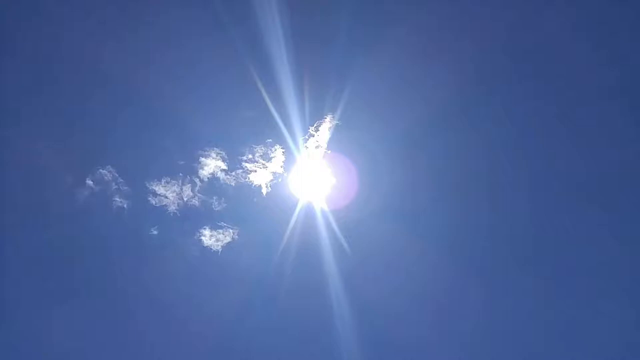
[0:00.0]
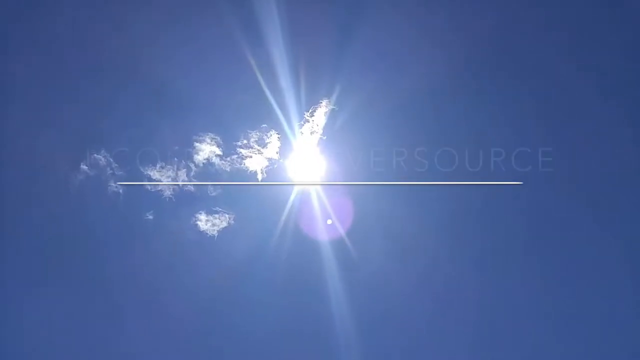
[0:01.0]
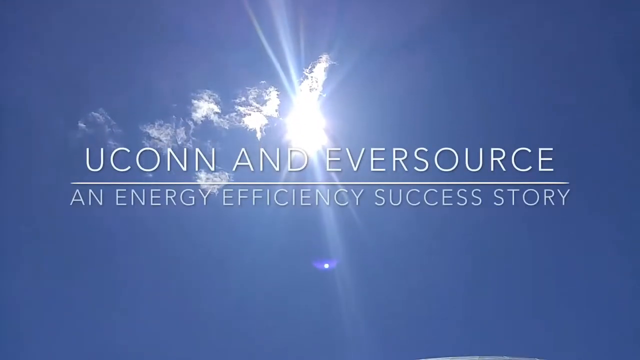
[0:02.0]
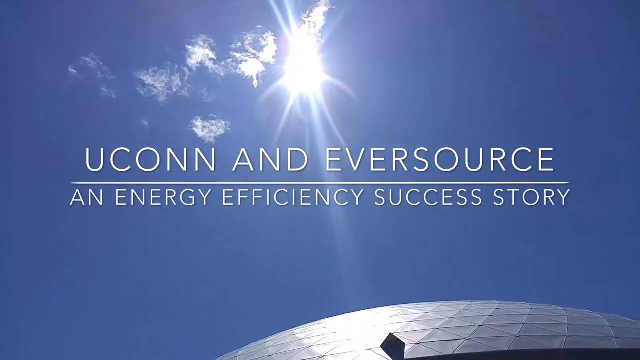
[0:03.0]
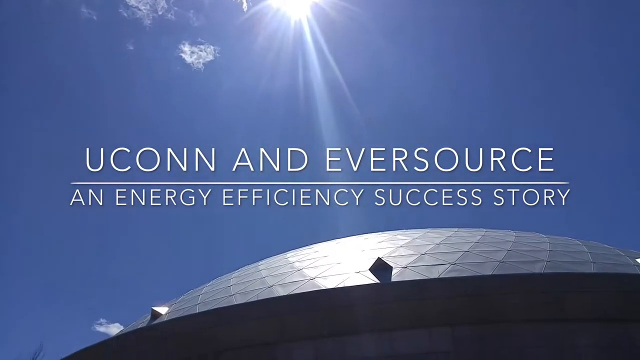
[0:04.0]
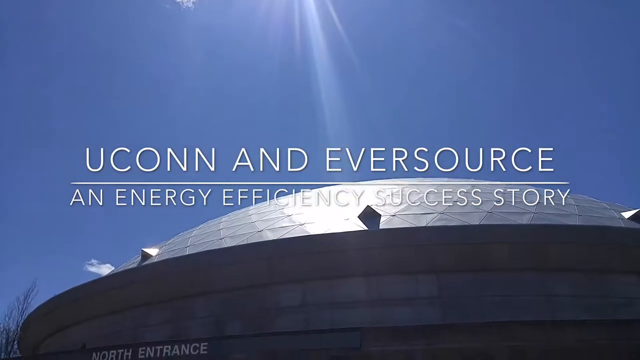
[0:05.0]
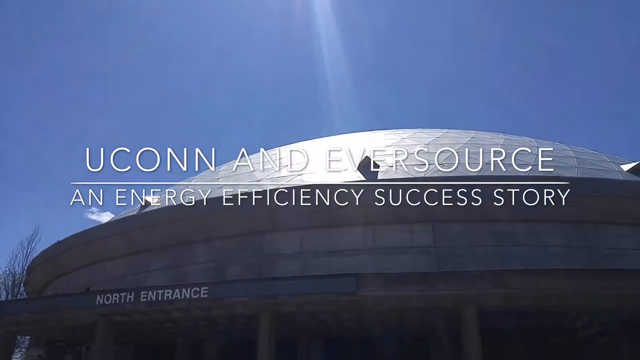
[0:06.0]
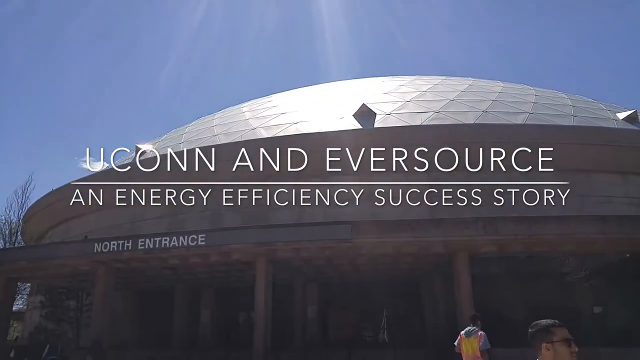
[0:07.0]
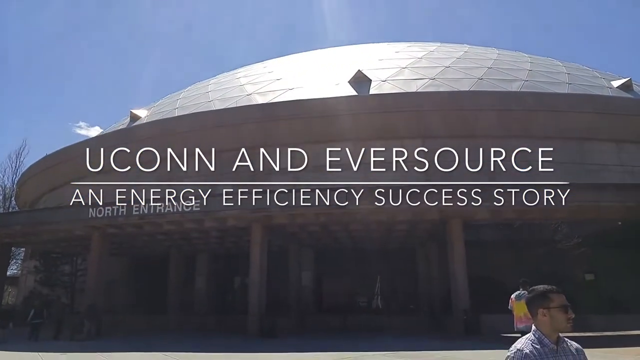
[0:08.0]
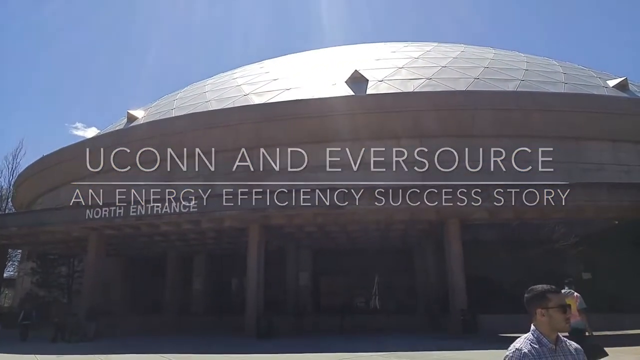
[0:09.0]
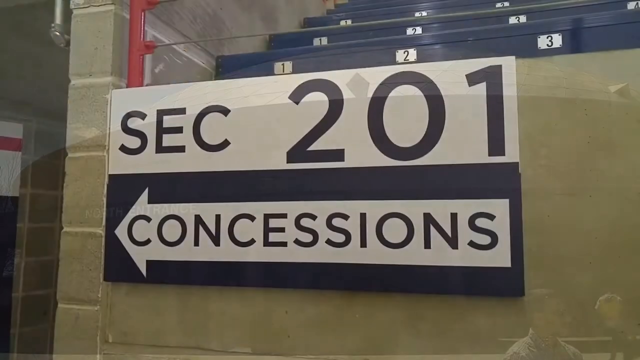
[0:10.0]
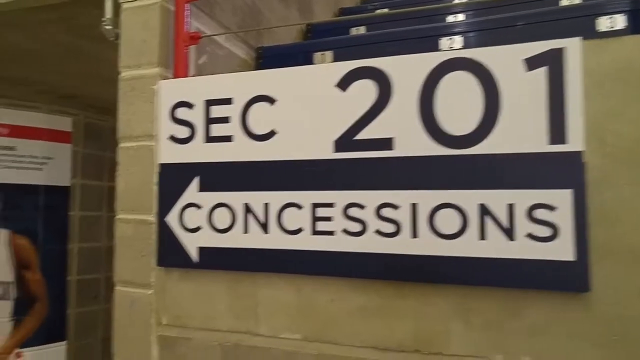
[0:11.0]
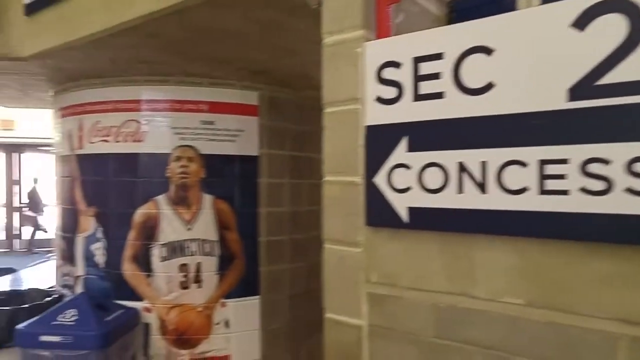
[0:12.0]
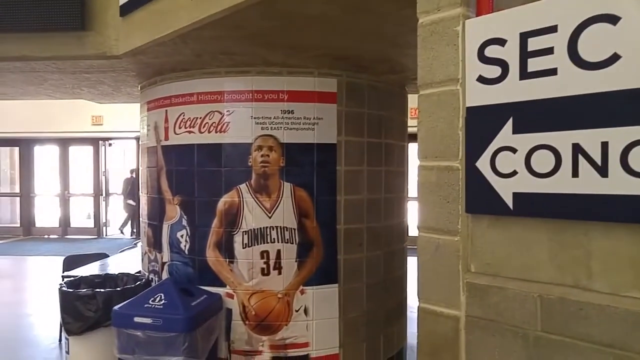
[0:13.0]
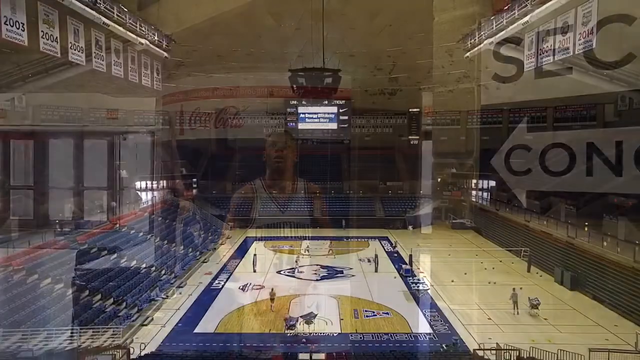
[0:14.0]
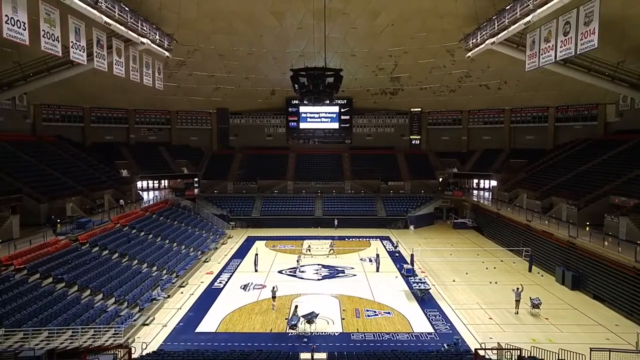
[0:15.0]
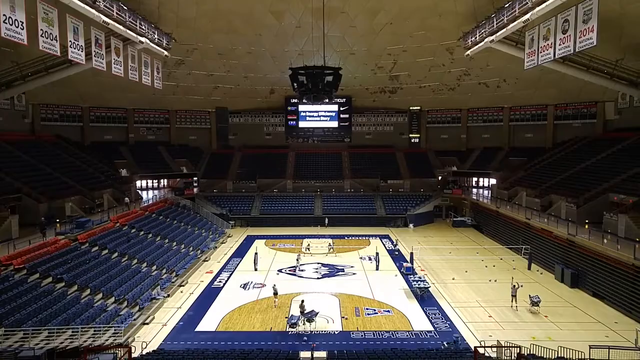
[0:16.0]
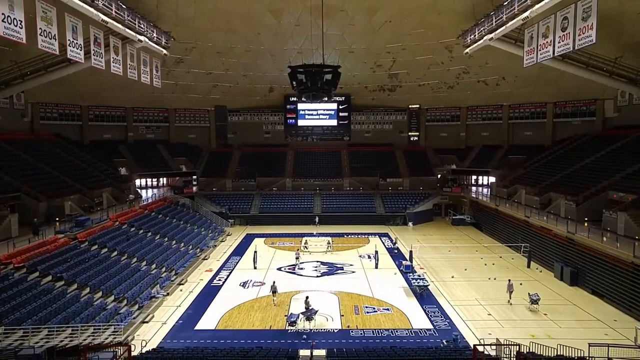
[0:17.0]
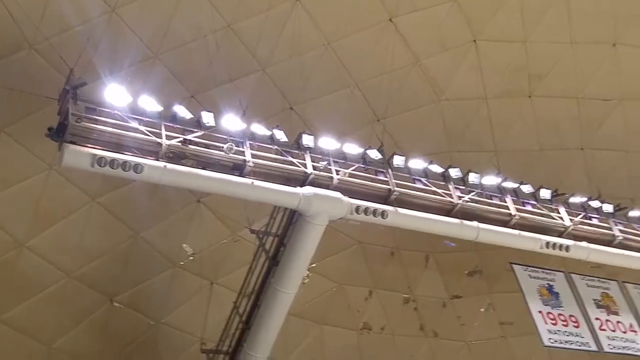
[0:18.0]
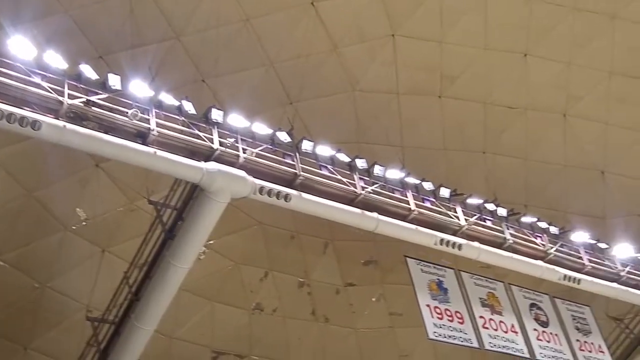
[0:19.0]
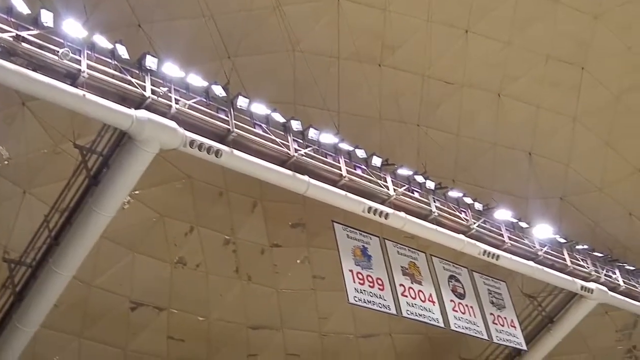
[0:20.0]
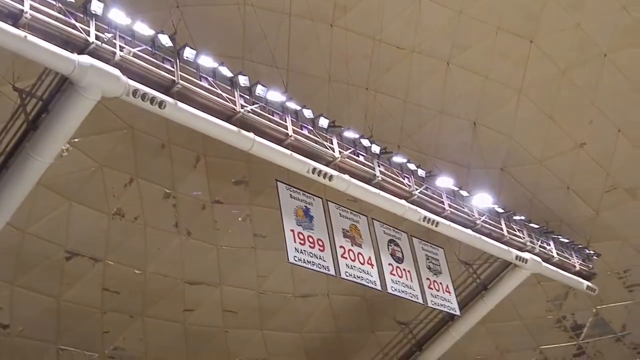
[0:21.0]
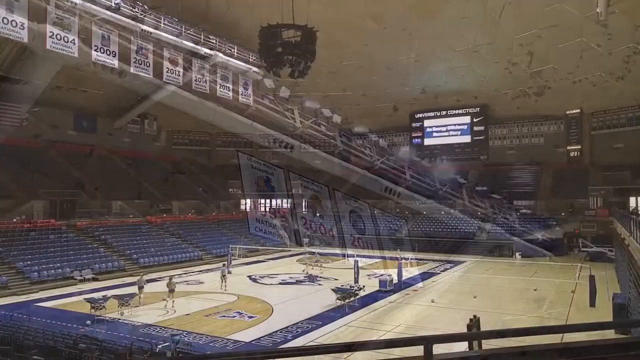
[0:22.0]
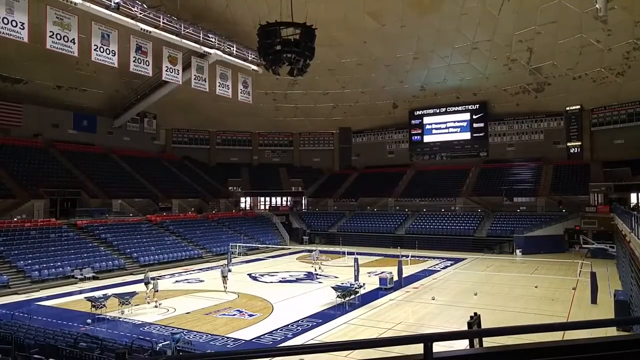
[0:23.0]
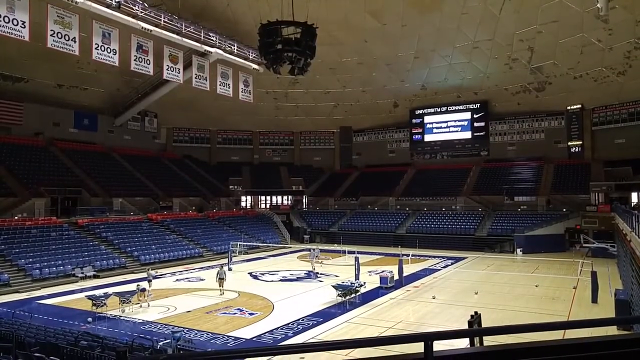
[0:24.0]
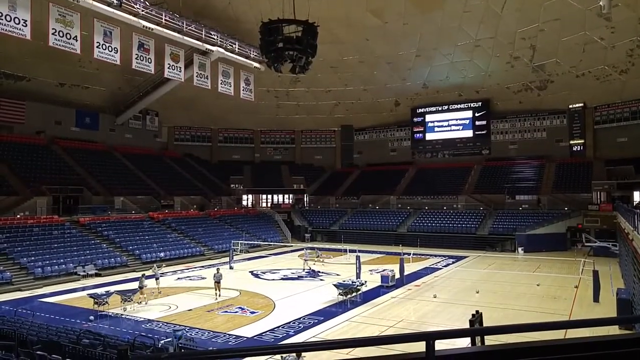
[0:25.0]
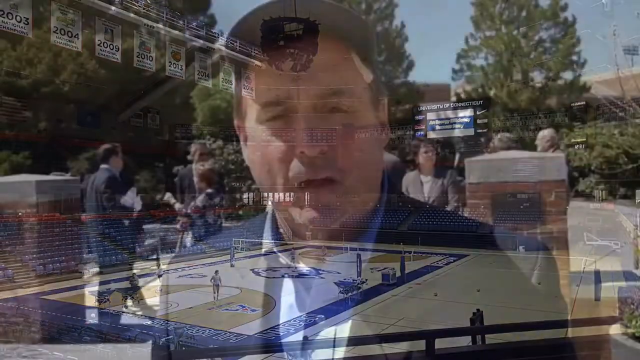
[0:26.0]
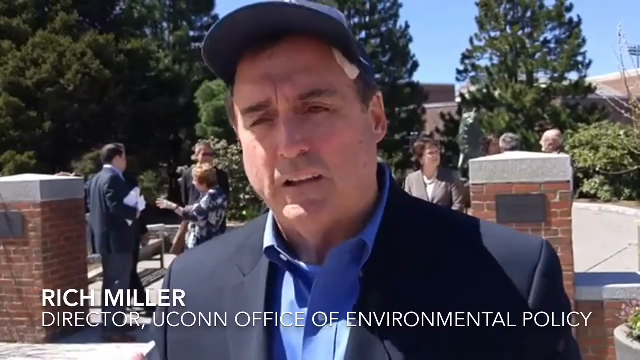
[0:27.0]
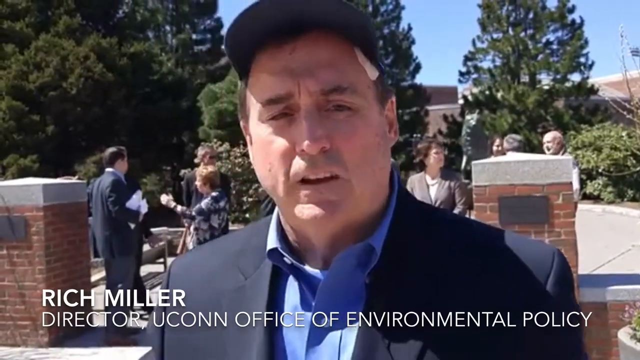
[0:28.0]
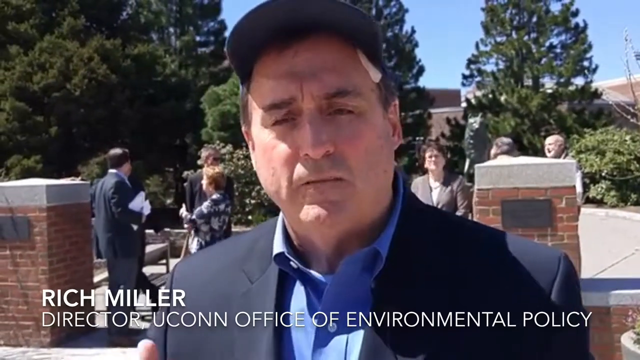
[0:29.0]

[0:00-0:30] The video is about UConn and Eversource and an energy efficiency success story. A building with a volleyball court is shown; there is a basketball poster with the player number 34, and it is unclear whether the space is also a basketball court, but volleyball is set up in it at the moment. Rich Miller, director of the UConn Office of Environmental Policy, is interviewed outdoors. The volleyball arena is very big, with a ceiling probably about 100 feet high. The court looks like it may be meant for basketball as well, though there appears to be nowhere for basketball hoops to go.